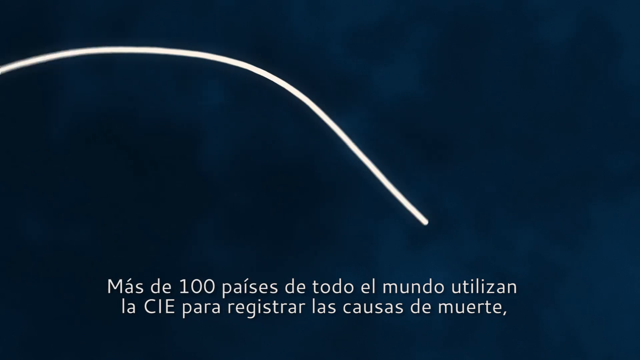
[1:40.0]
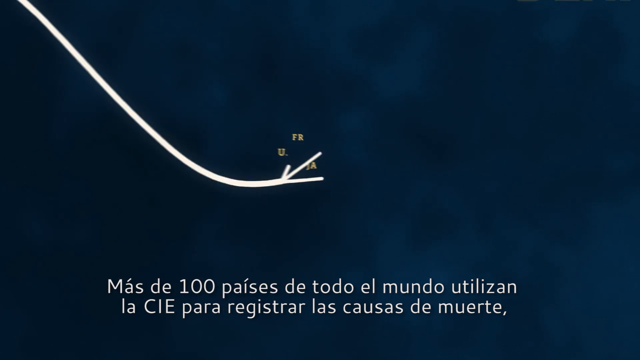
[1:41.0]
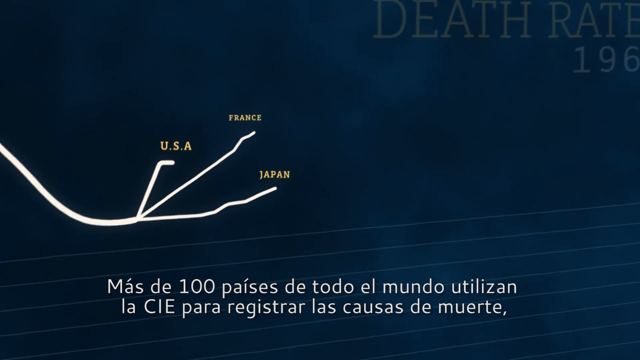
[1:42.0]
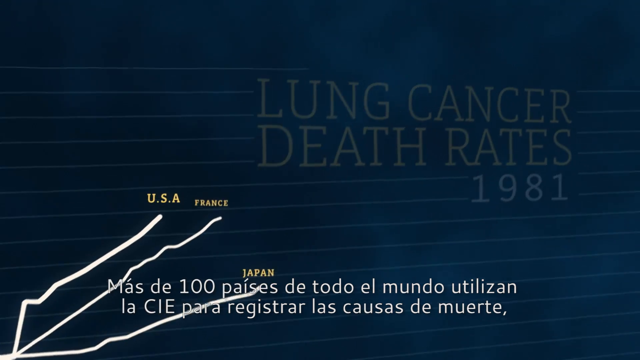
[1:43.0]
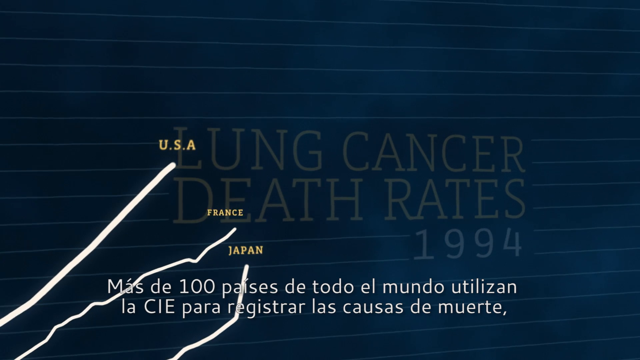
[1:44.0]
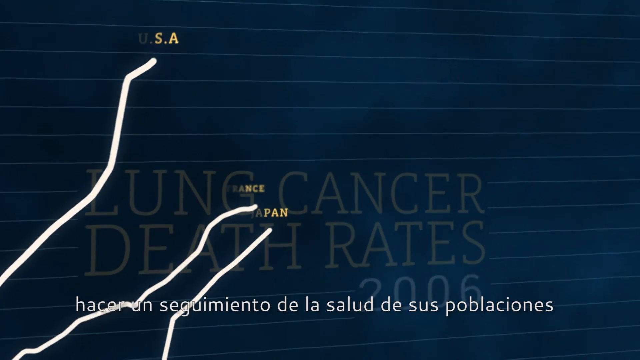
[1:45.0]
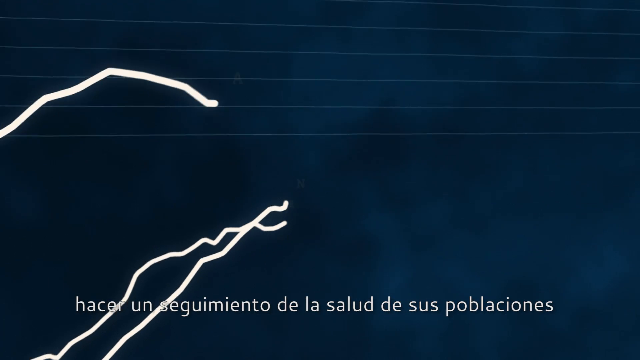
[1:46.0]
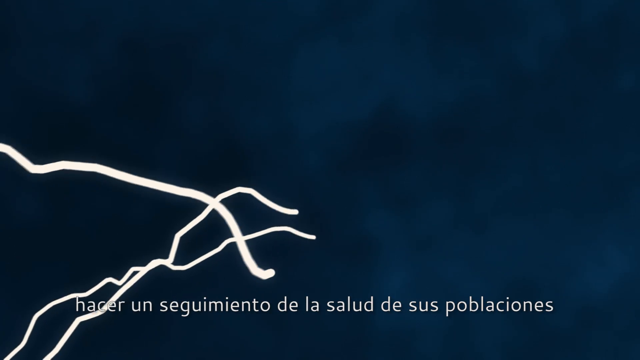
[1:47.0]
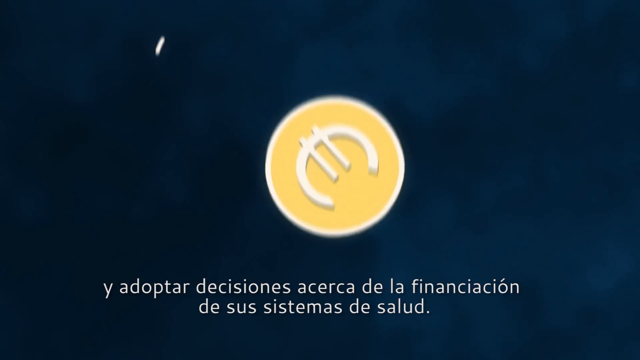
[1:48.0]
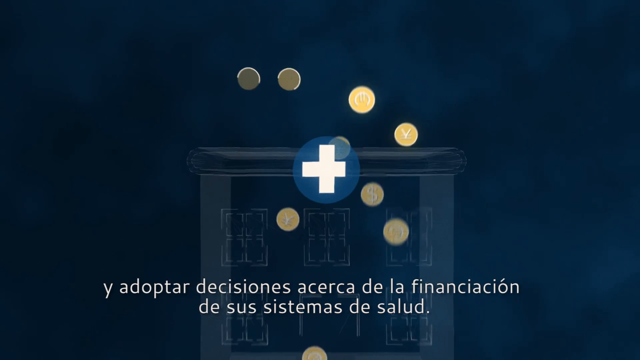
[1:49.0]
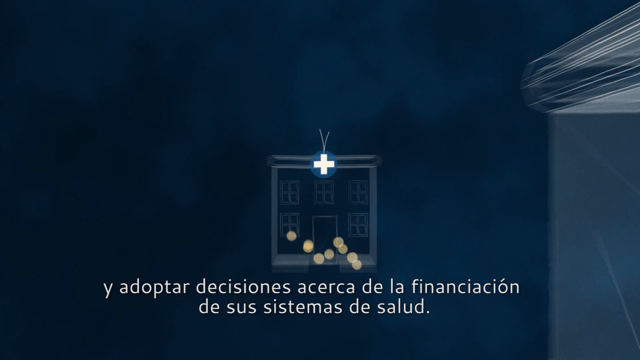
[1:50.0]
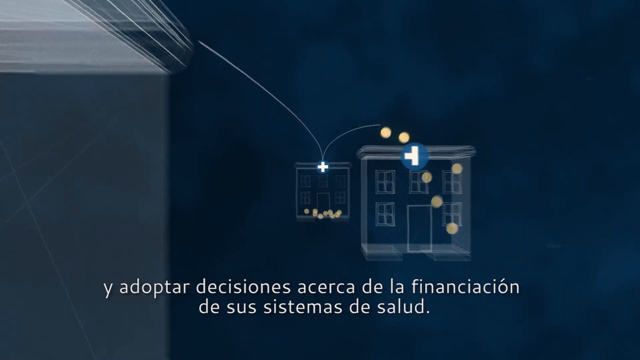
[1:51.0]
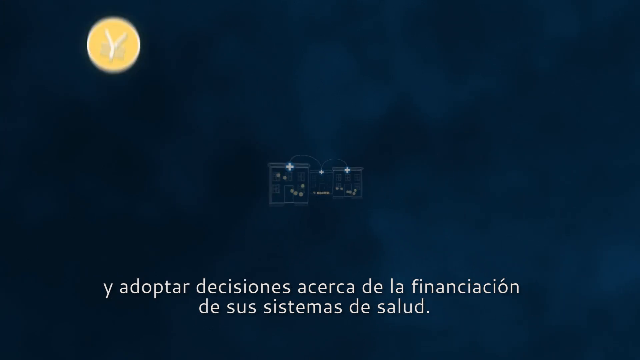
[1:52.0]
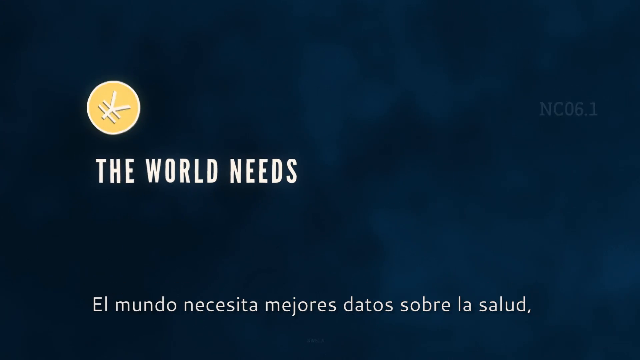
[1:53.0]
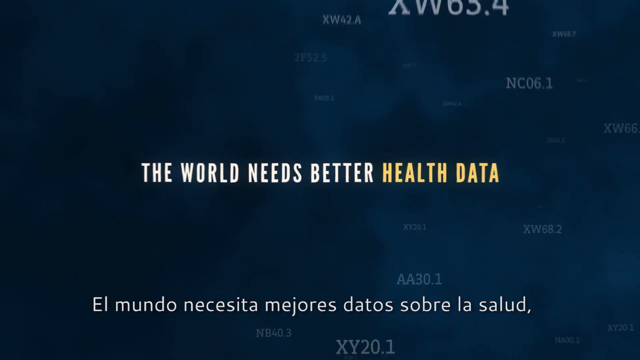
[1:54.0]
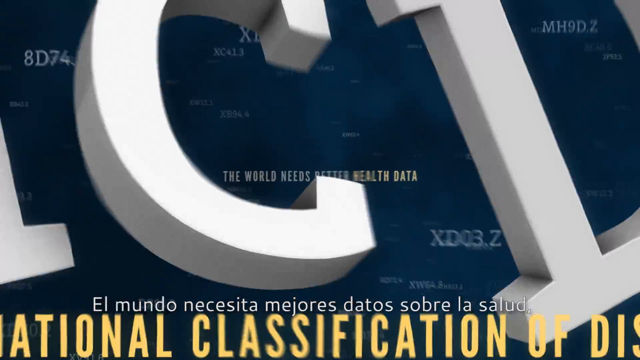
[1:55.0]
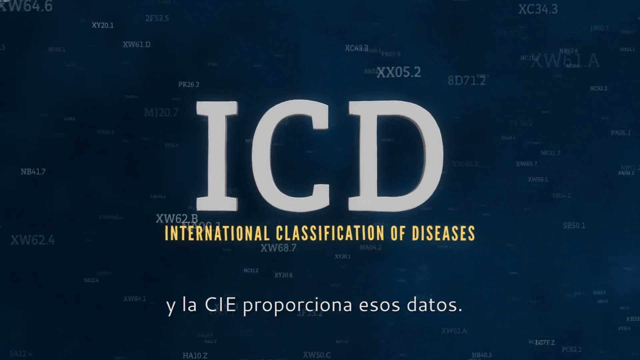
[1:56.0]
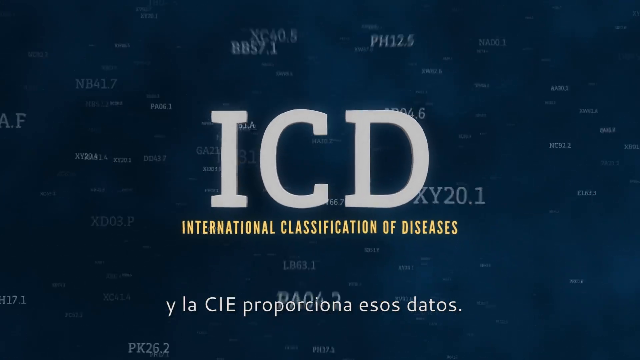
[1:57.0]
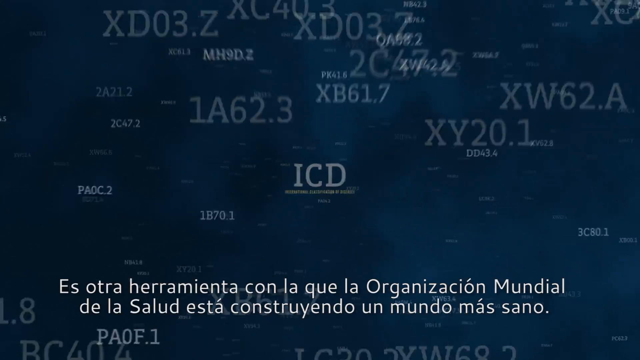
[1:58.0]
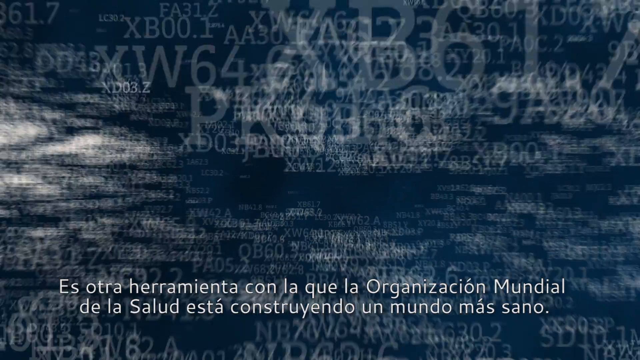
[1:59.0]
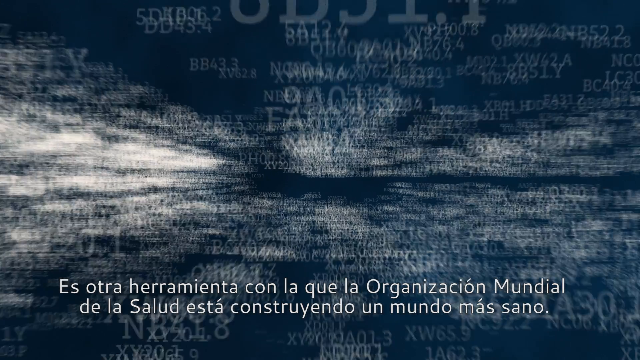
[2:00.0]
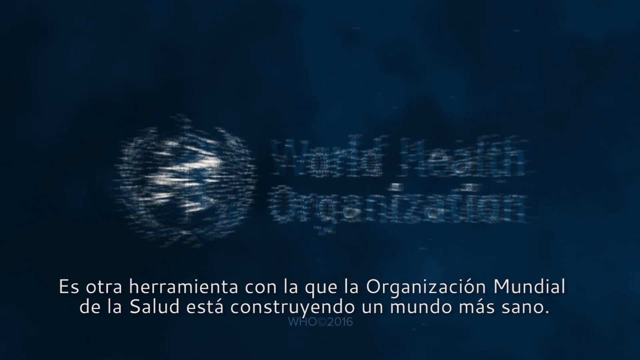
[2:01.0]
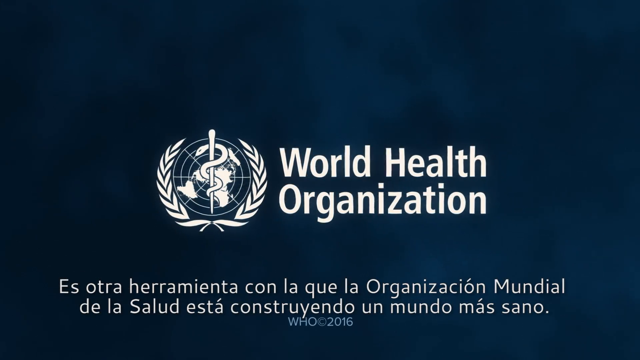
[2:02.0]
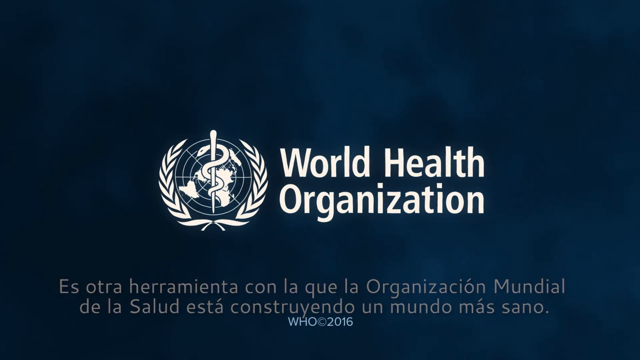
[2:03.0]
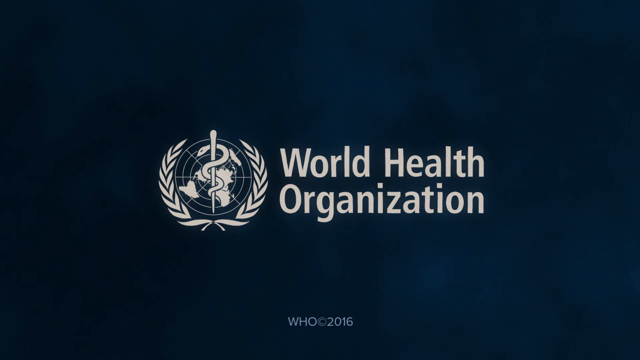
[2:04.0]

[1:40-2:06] A white line moves on a dark blue background, almost in the shape of a chart. The line splits into three moving lines labelled "USA," "France" and "Japan," which move upwards and around along different paths. The lines meet at a graphic of a building with a white cross on it, and yellow dots fall into the building. On-screen text reads "The world needs better health data. ICD, International Classification of Diseases." The camera zooms all the way out, and lots of little words come together to form the World Health Organization logo.